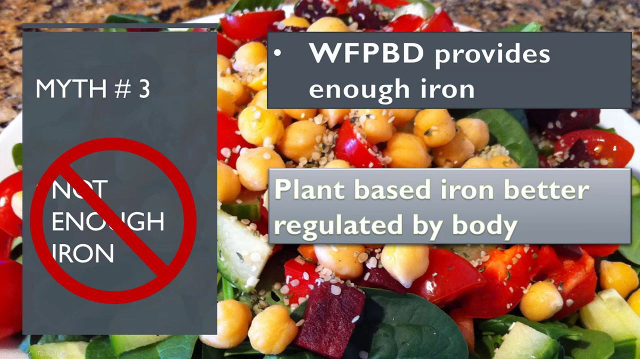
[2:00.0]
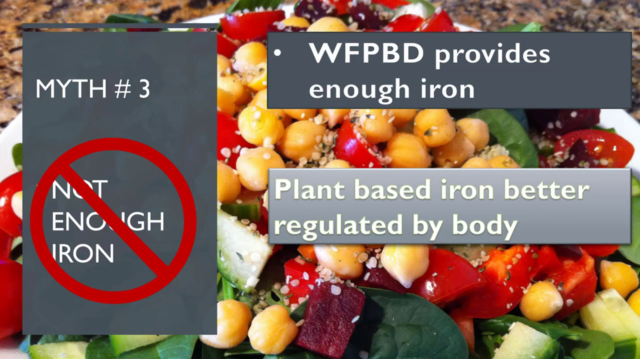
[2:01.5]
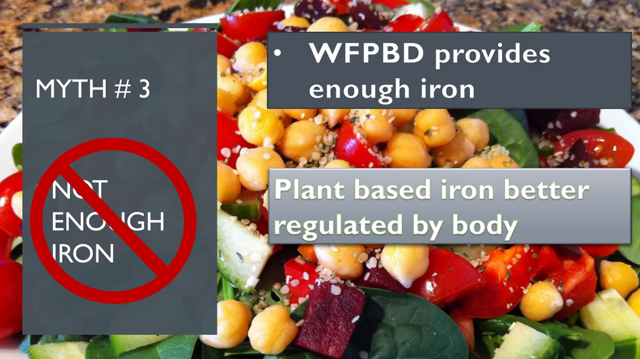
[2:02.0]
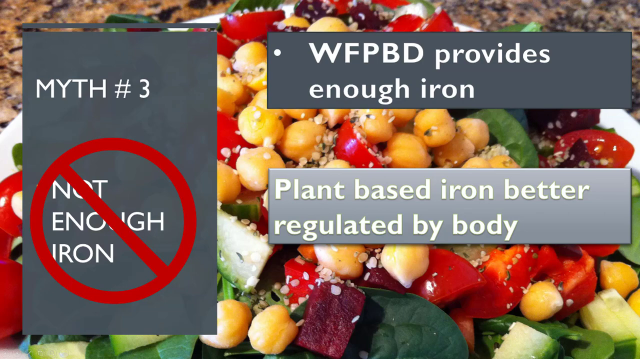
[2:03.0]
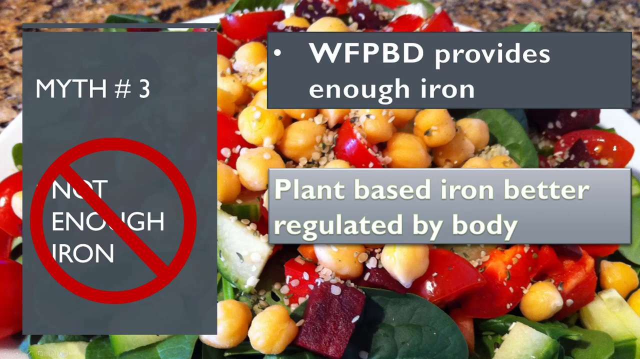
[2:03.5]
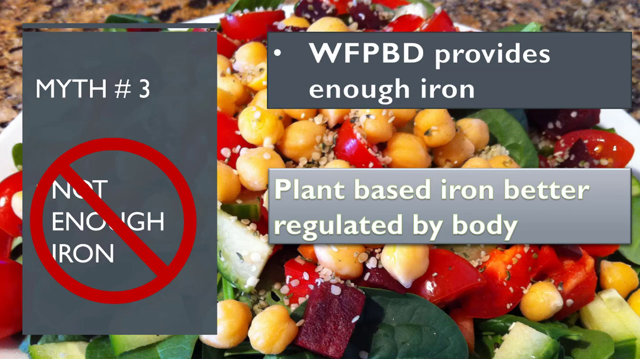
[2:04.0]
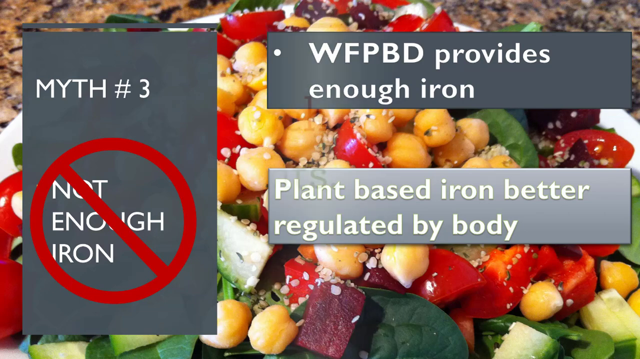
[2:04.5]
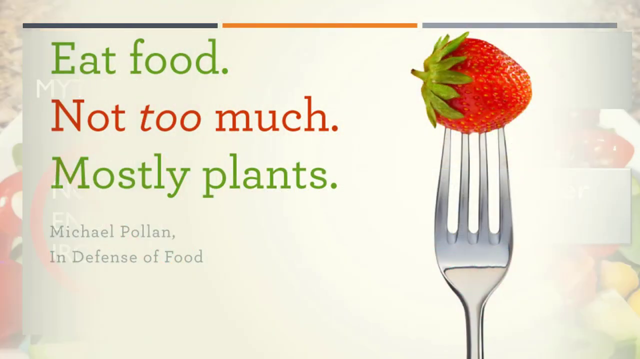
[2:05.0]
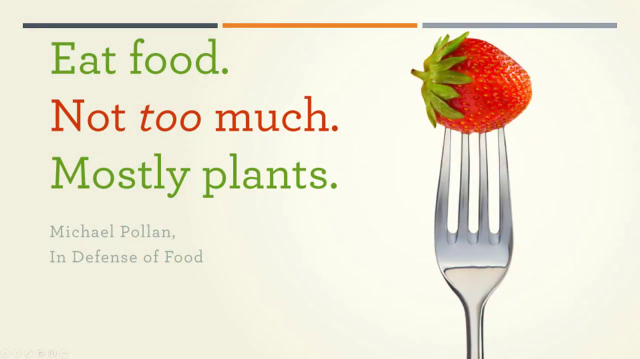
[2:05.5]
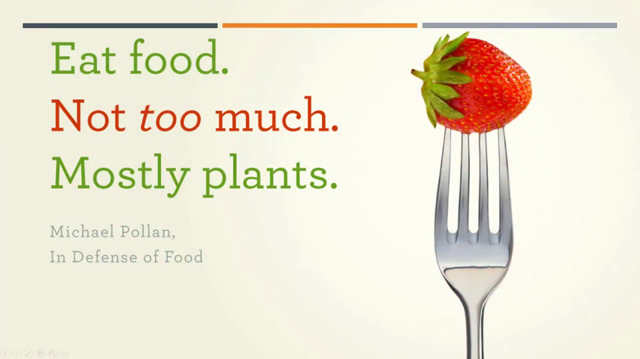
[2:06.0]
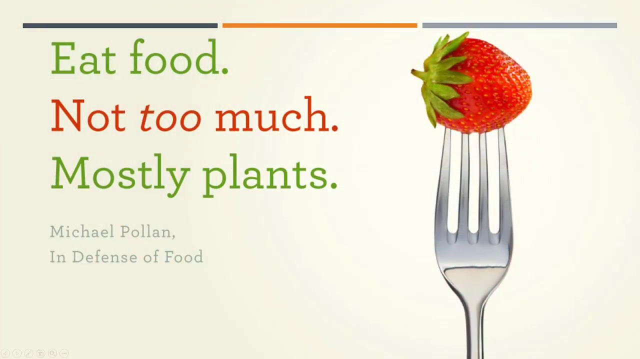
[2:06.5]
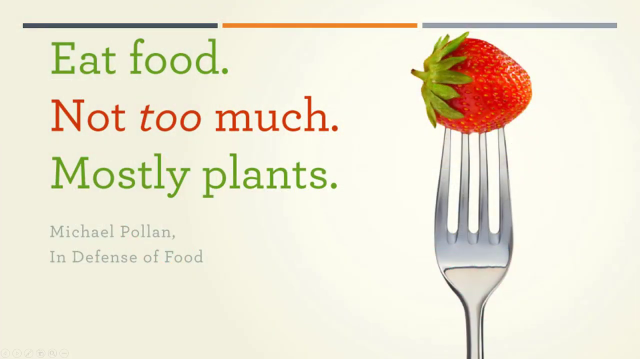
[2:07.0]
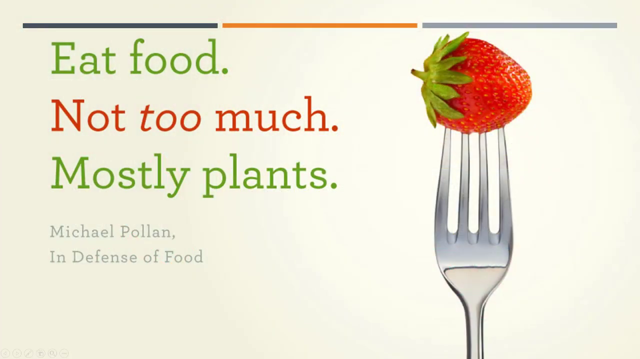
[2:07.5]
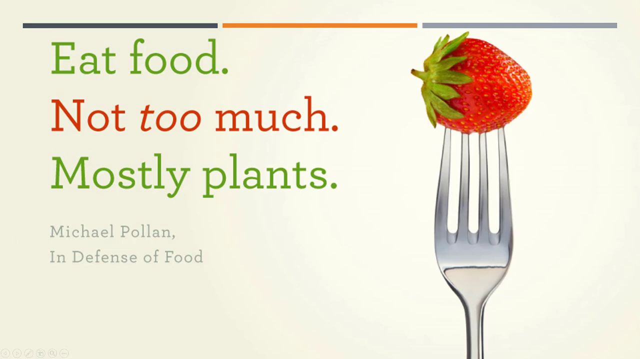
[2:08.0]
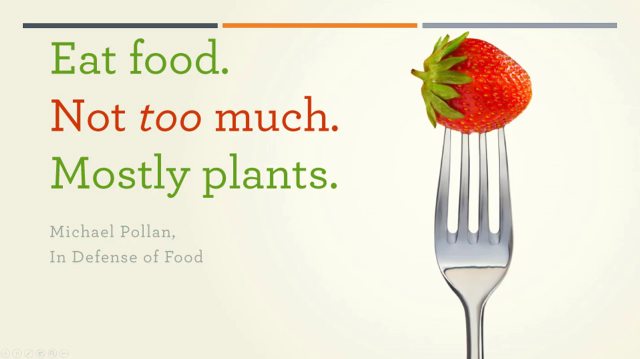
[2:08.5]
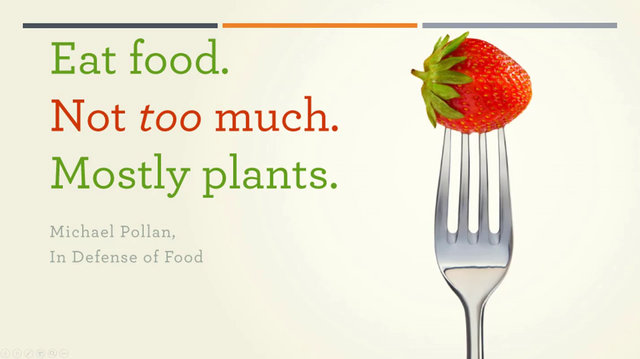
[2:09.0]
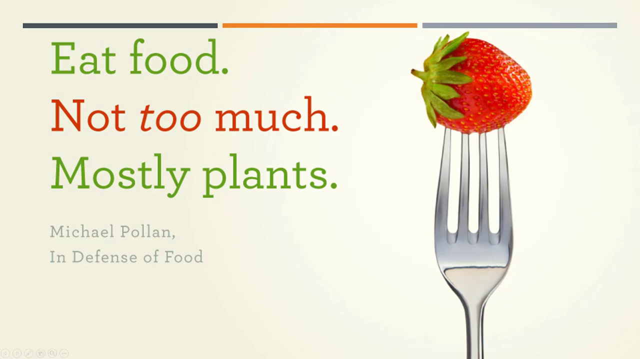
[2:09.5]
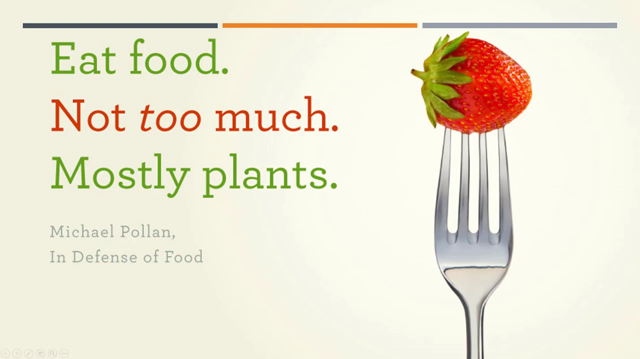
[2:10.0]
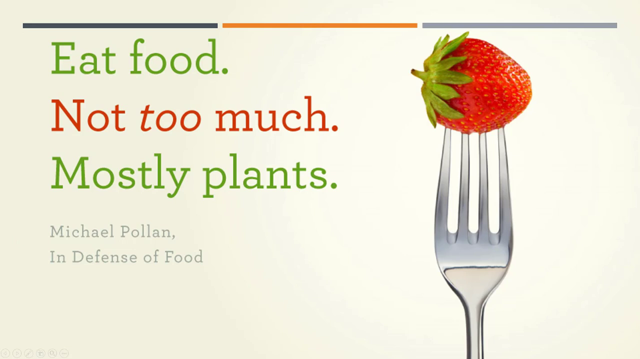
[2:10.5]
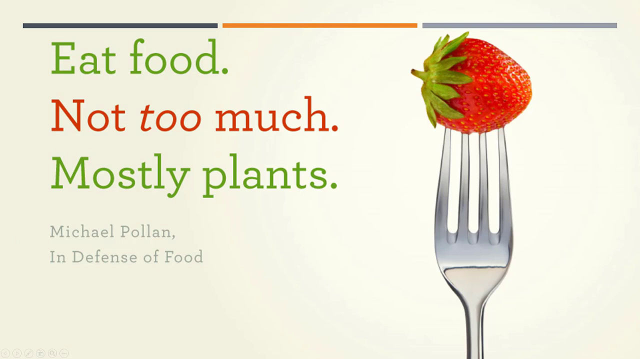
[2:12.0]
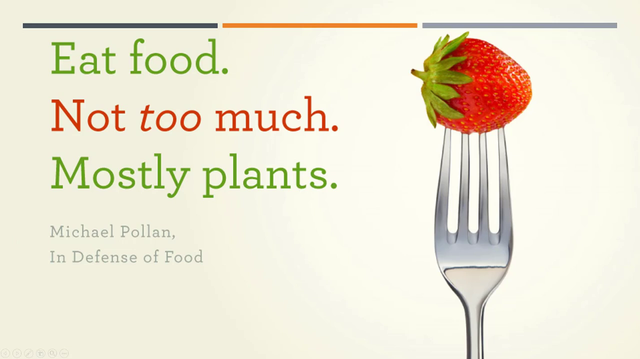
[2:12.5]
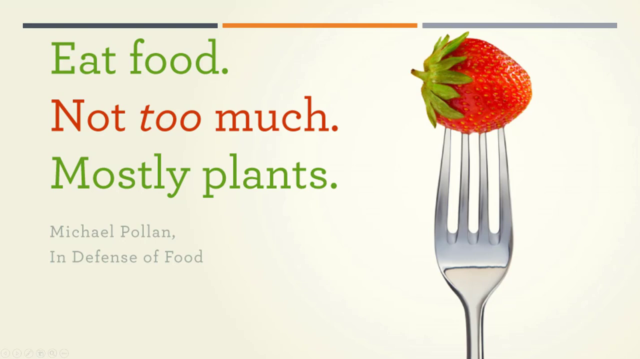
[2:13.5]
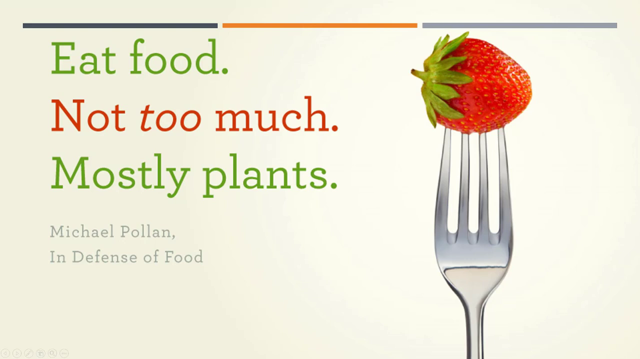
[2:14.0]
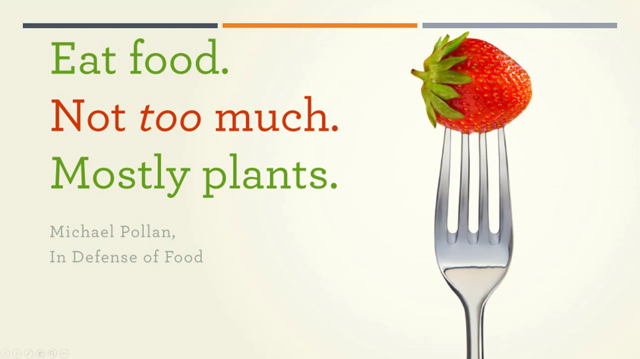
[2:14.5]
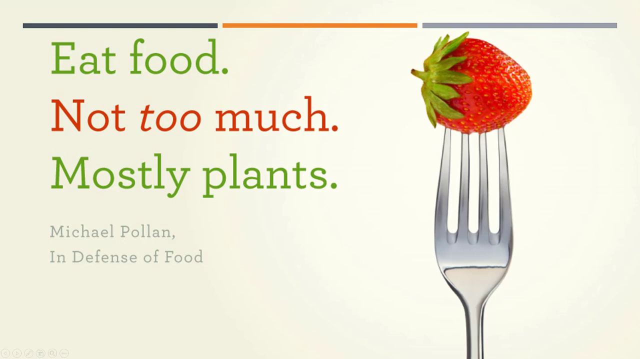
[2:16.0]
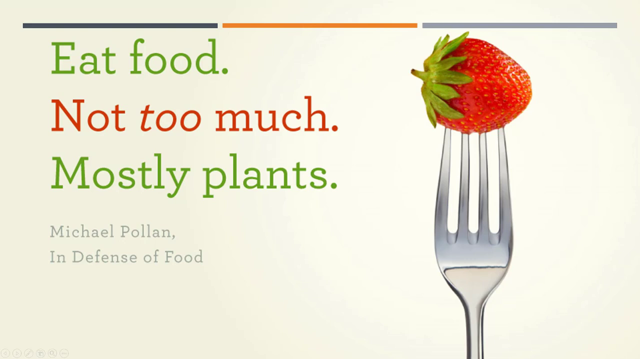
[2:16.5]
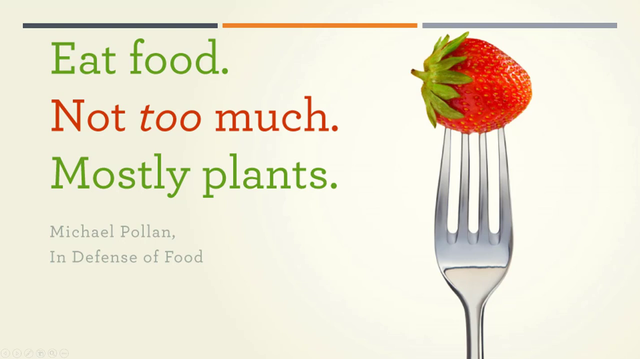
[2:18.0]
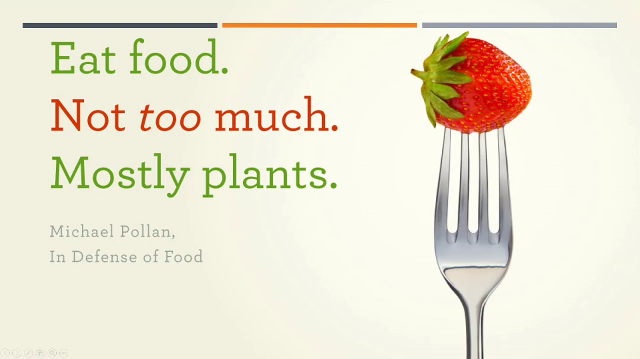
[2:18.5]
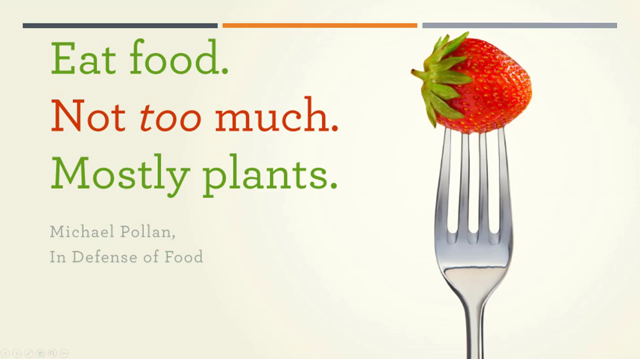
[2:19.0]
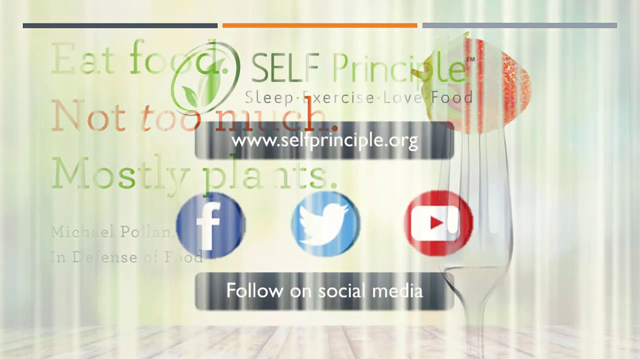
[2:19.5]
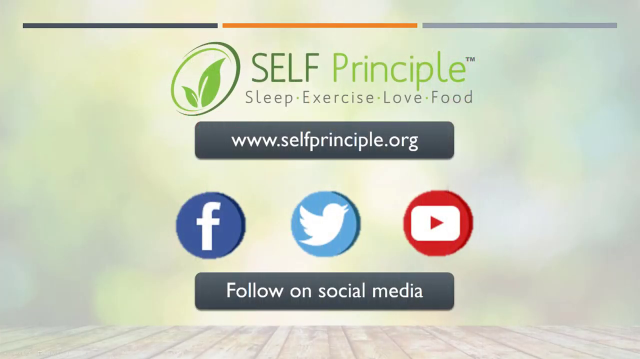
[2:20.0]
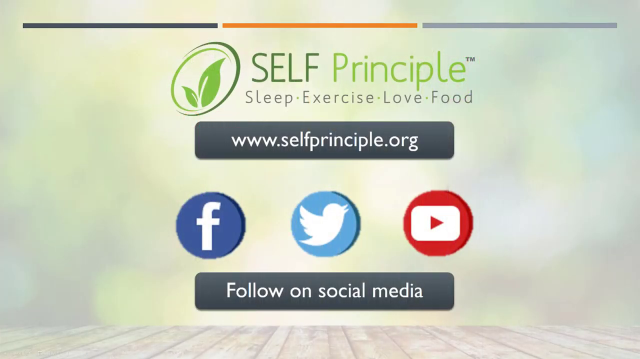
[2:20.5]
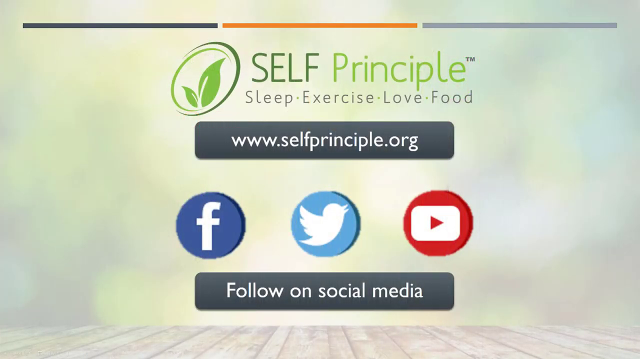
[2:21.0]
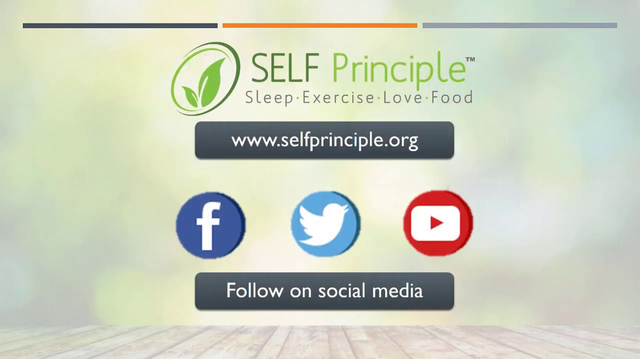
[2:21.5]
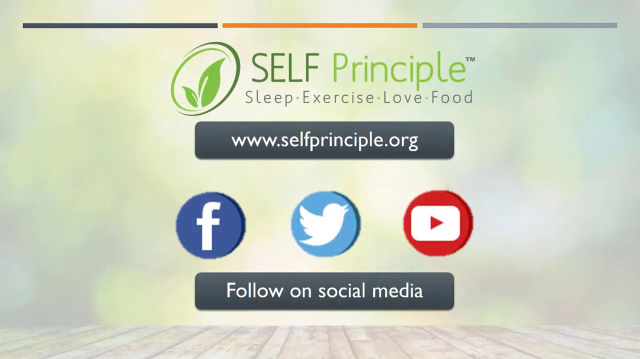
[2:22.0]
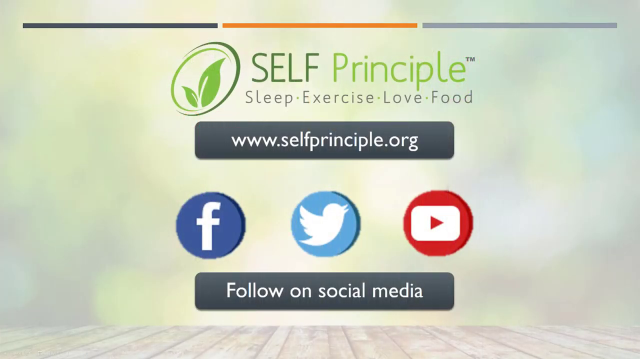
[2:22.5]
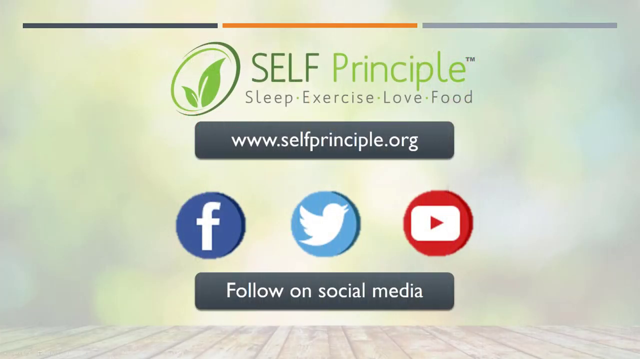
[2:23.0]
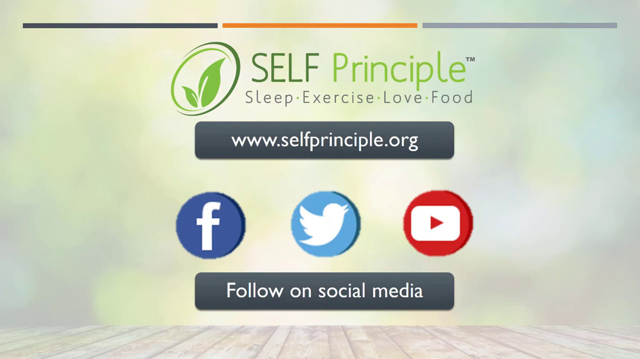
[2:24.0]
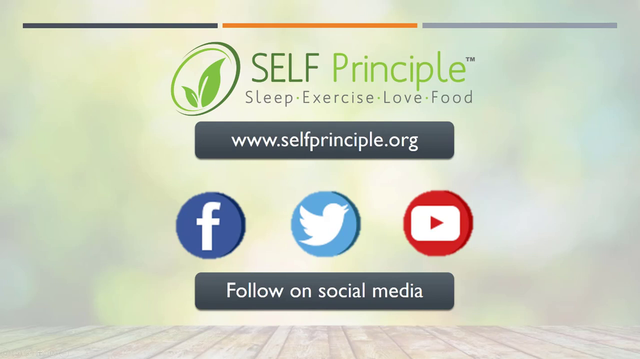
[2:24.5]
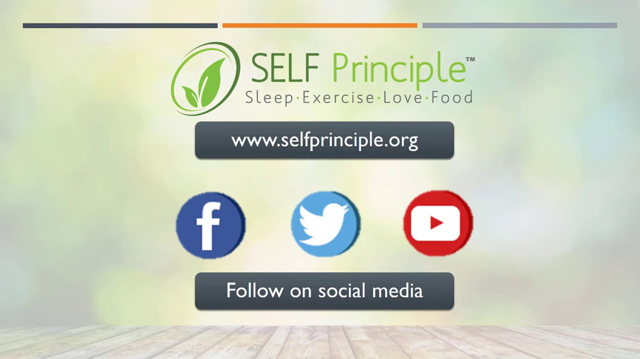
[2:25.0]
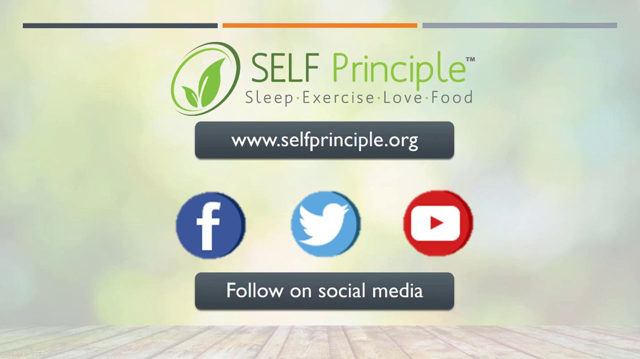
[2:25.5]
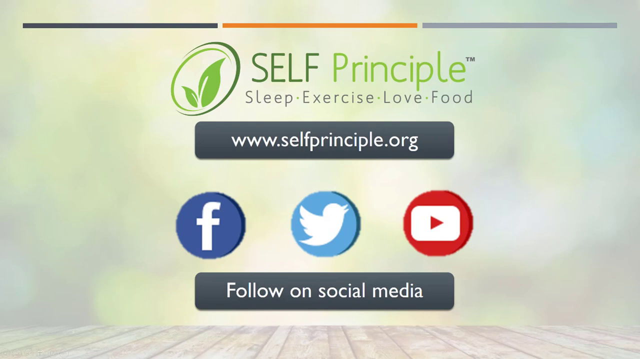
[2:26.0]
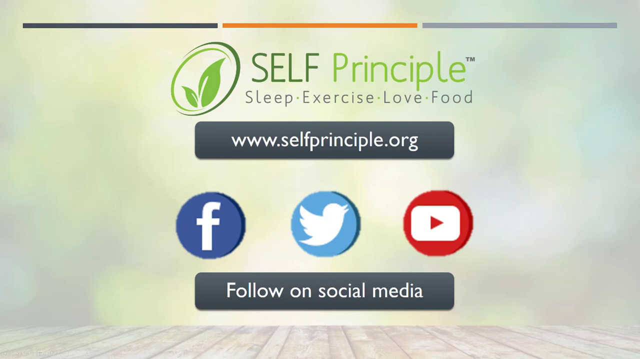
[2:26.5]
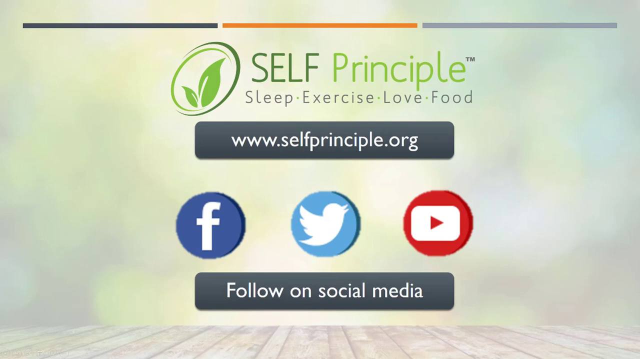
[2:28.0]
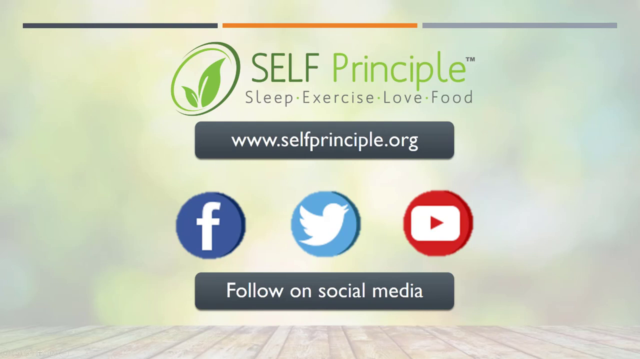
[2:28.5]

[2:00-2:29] A transition fades away the previous text and pictures to reveal a new slide on a pale yellow background, with a picture near the leftmost side of a fork sticking upward with a strawberry impaled on it. On the left side are closing statements: "eat food, not too much, mostly plants." "Eat food" and "mostly plants" are in green text, while the middle portion, "not too much," is in red, with the word "too" italicized. Underneath, at the bottom, in light gray font, is the name "Michael Pollan," and below that "in defense of food." One final transition shows how to contact the organization through social media, with icons for Facebook, Twitter, and YouTube and a statement saying to follow them on social media.